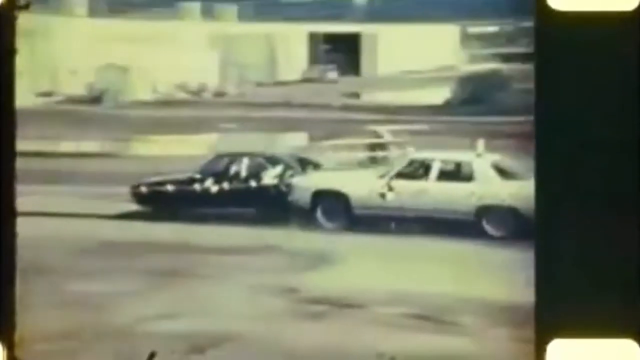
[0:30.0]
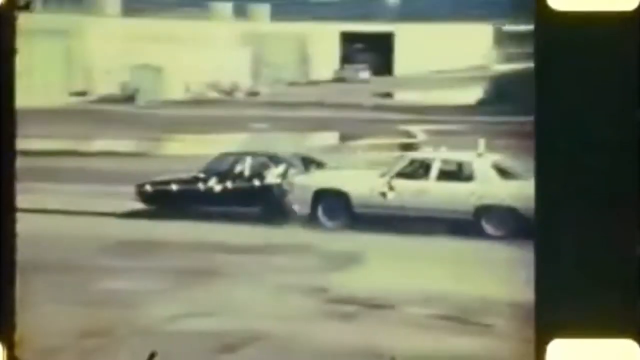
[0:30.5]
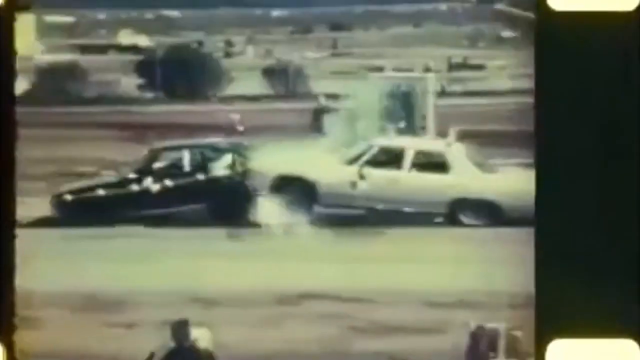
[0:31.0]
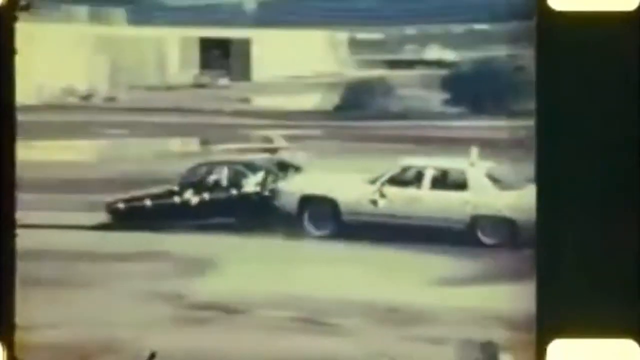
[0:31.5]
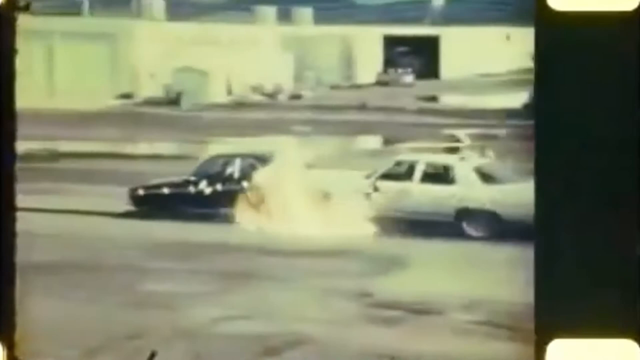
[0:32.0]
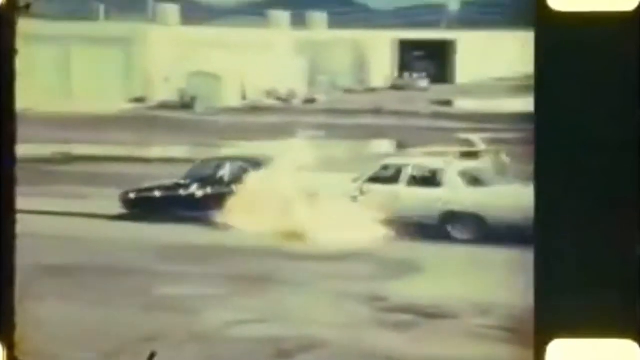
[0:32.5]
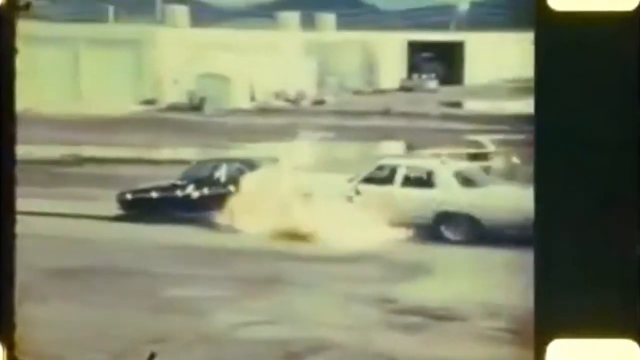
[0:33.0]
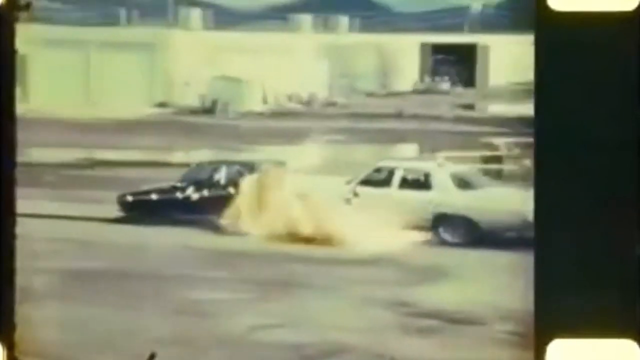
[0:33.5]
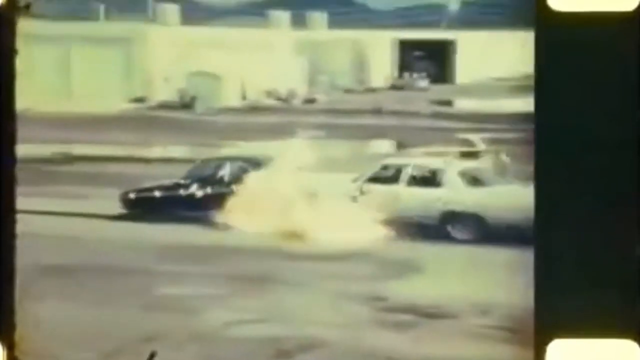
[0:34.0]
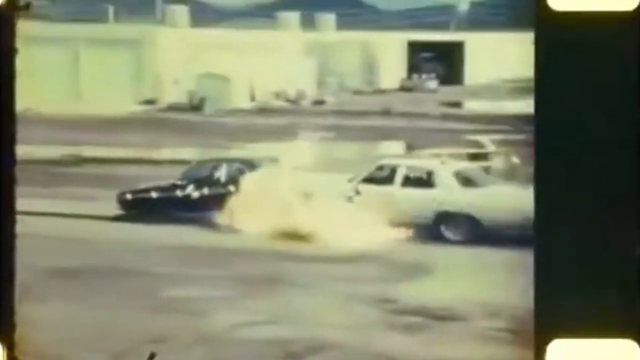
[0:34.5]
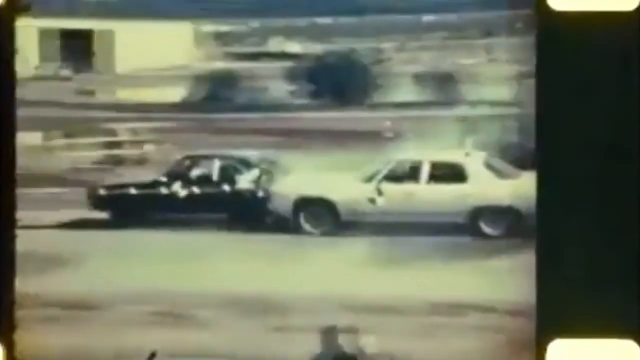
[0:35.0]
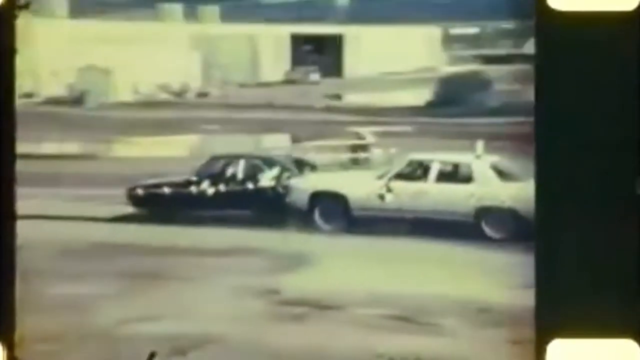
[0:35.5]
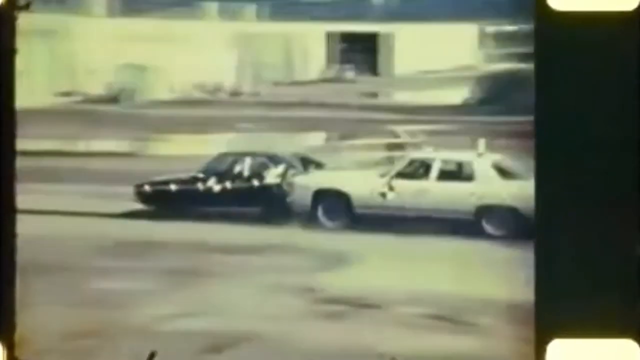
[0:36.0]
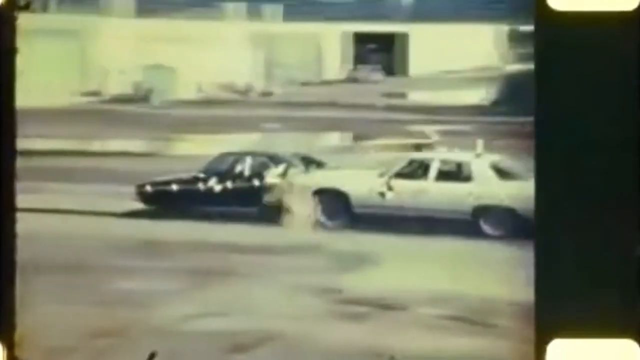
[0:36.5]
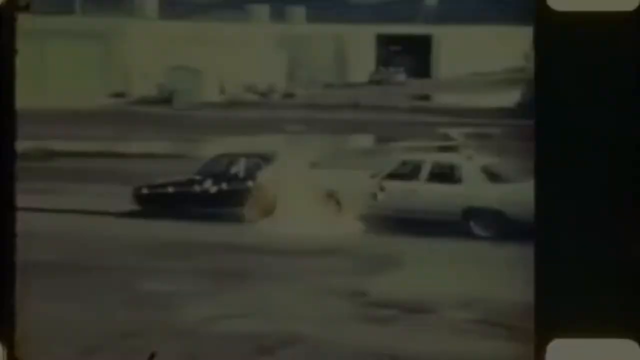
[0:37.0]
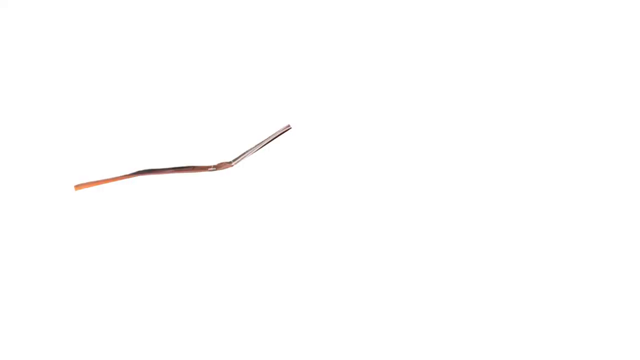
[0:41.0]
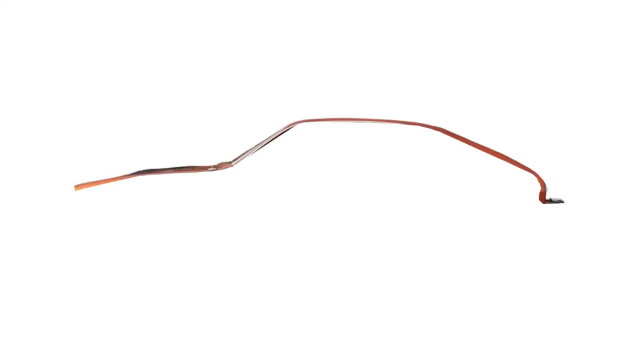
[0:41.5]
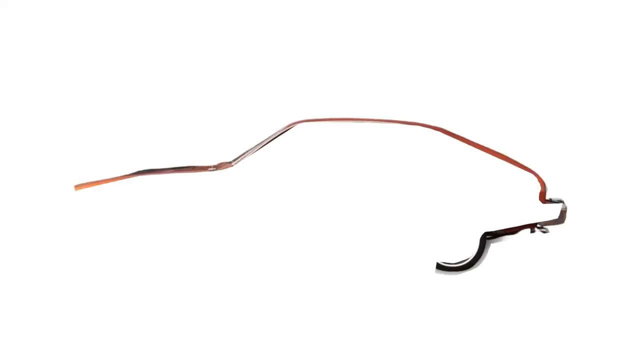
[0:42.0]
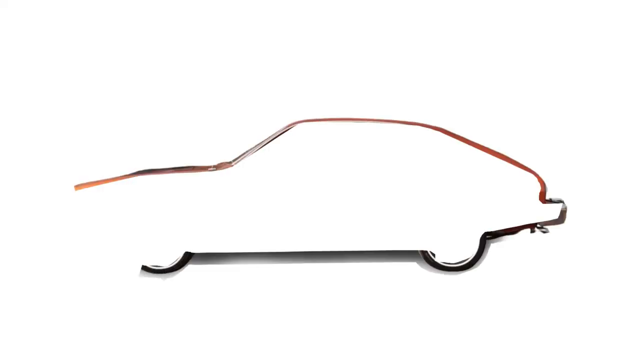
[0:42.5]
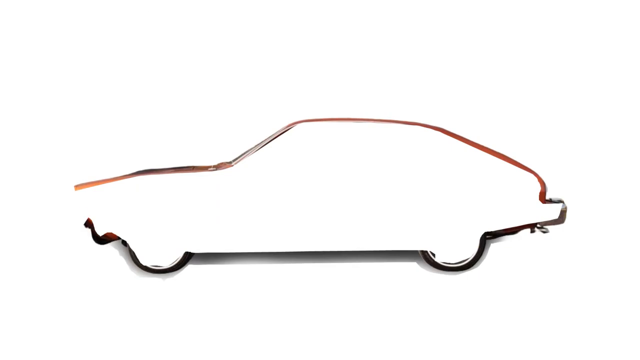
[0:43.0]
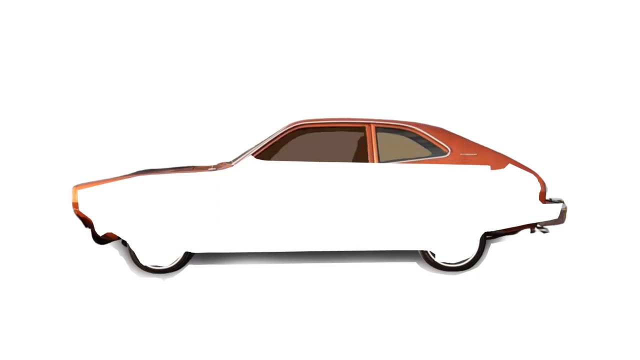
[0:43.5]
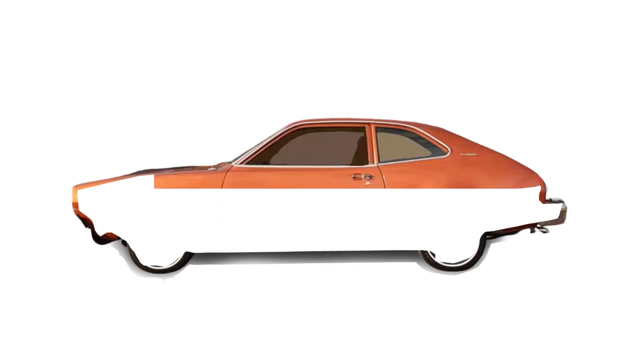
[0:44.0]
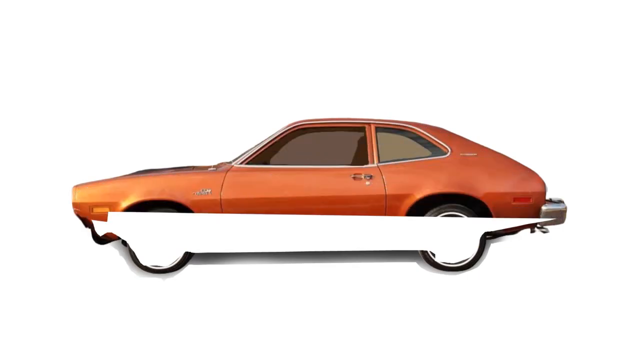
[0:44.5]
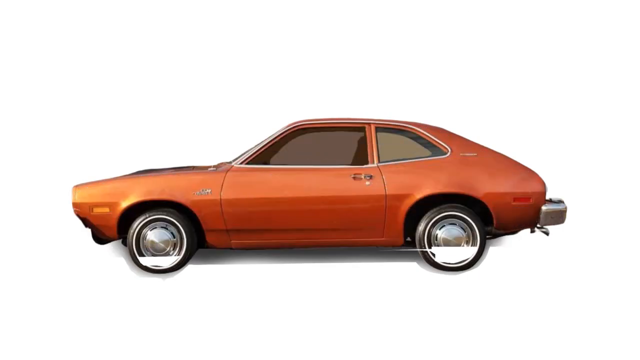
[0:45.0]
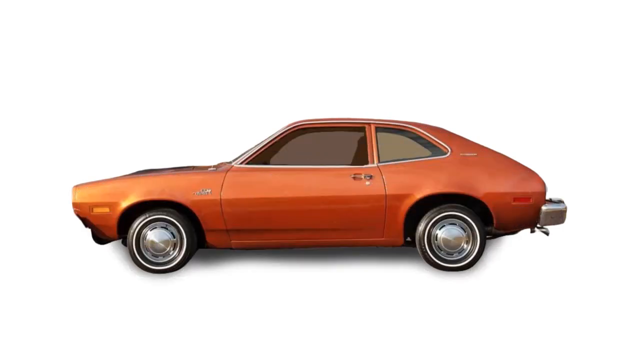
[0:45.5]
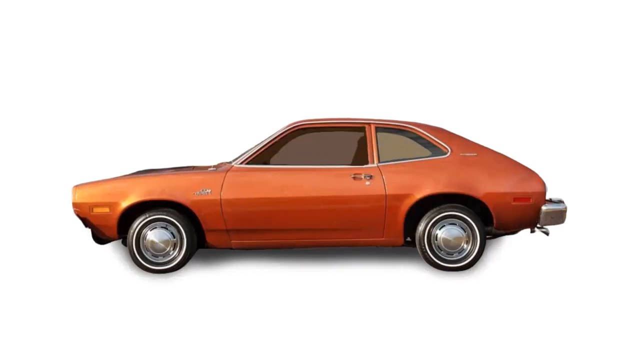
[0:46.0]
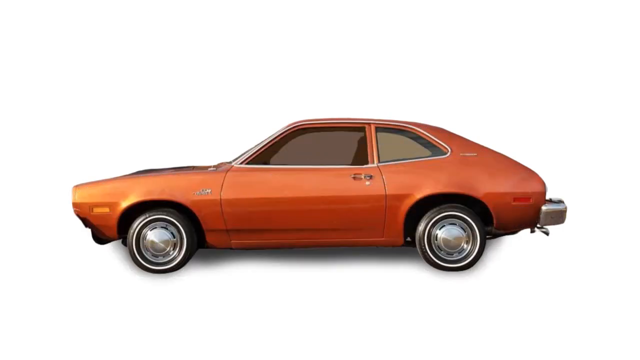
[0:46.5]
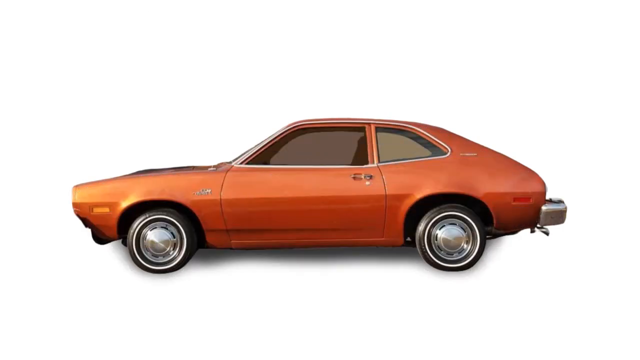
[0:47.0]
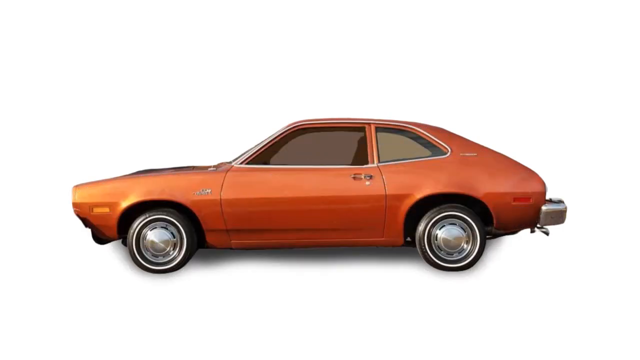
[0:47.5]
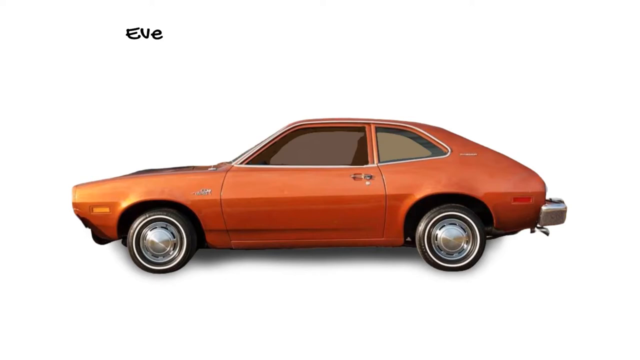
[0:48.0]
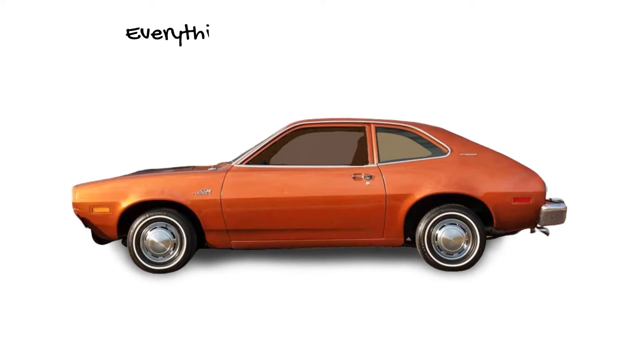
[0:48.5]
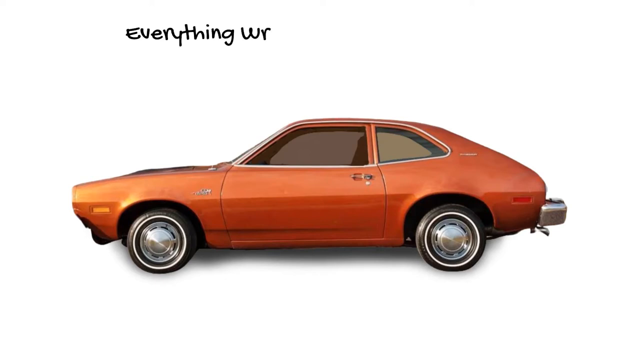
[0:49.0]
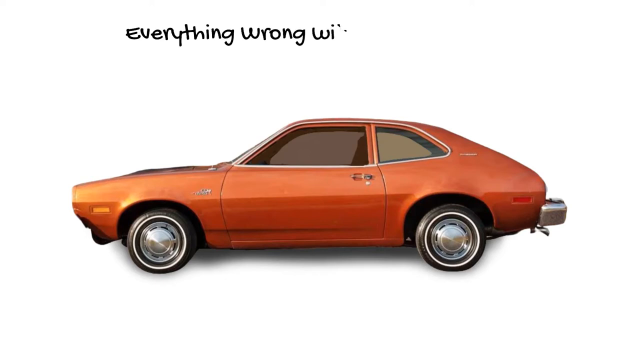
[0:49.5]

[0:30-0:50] The white car has basically already smashed into the rear end of the black car. White smoke rises up out of the rear end of the black vehicle. The white car's front tires appear to be up off the ground, and the impact raises the rear tires of the black car off the ground as well while pushing it forward on the street several feet from where it was parked. There does not appear to be anyone inside the vehicle that was hit. It appears to be a very bad crash between a car with a driver and a car simply parked on the side of the street.